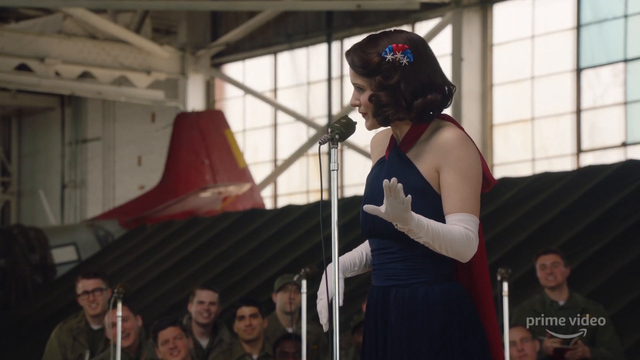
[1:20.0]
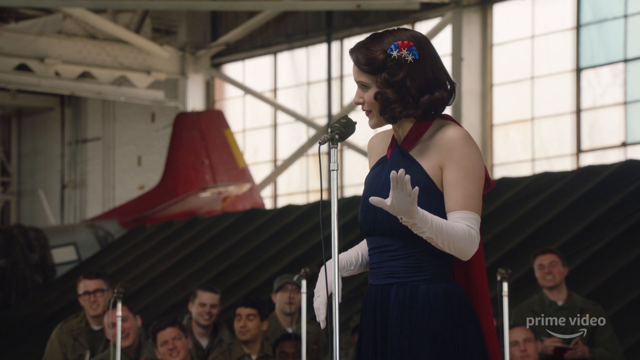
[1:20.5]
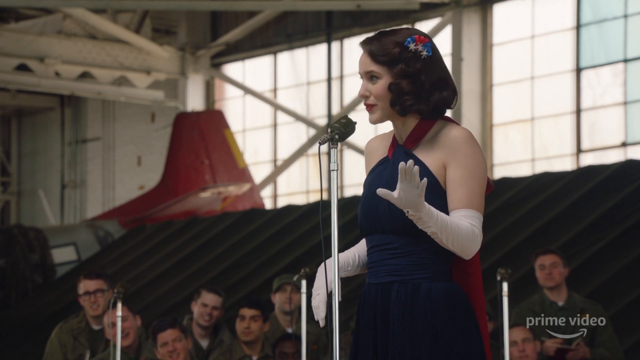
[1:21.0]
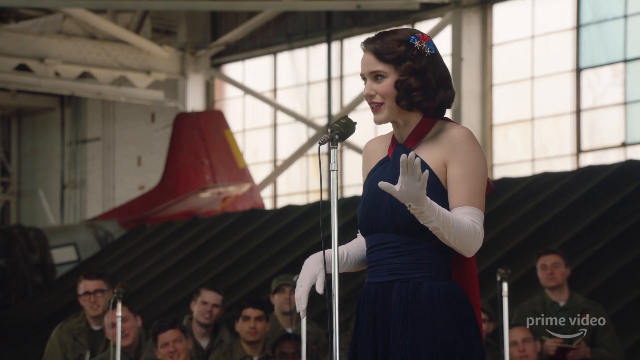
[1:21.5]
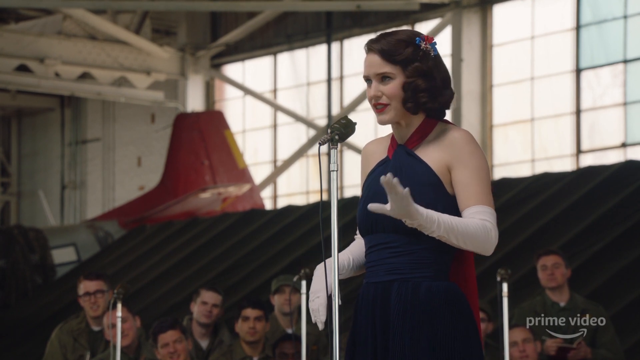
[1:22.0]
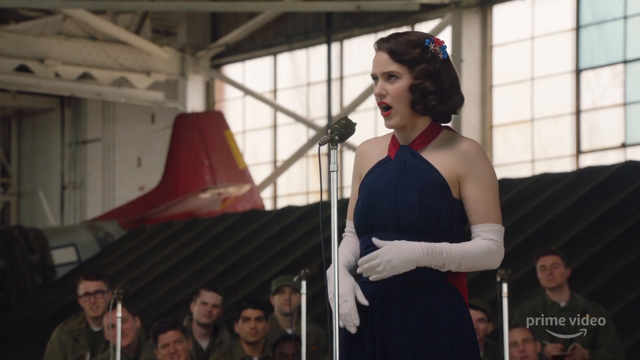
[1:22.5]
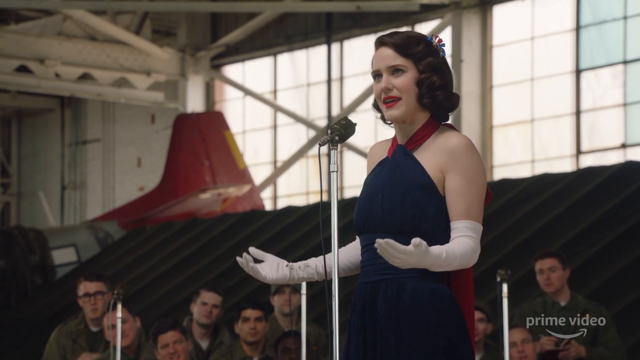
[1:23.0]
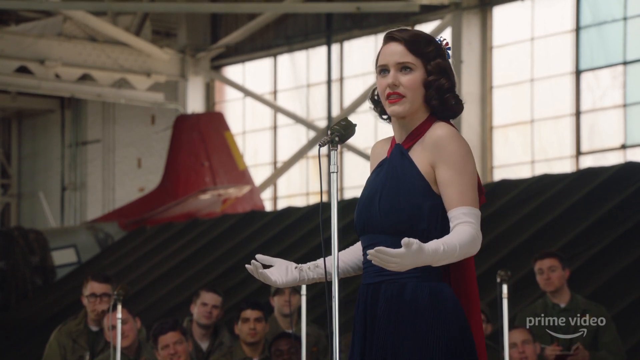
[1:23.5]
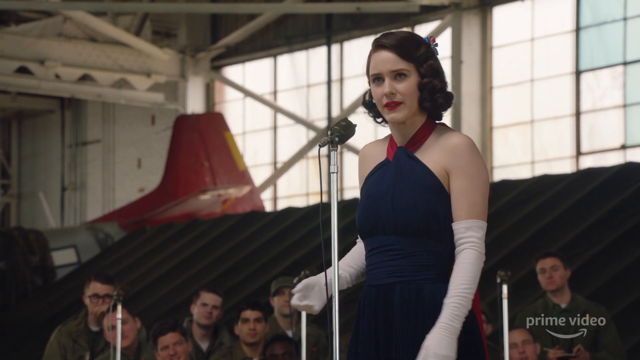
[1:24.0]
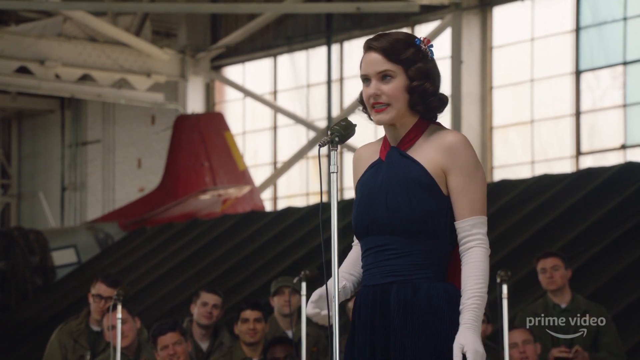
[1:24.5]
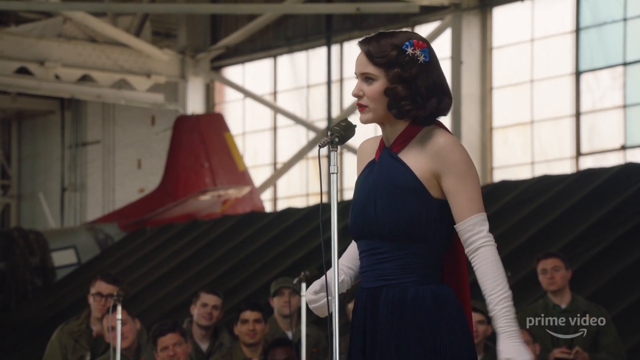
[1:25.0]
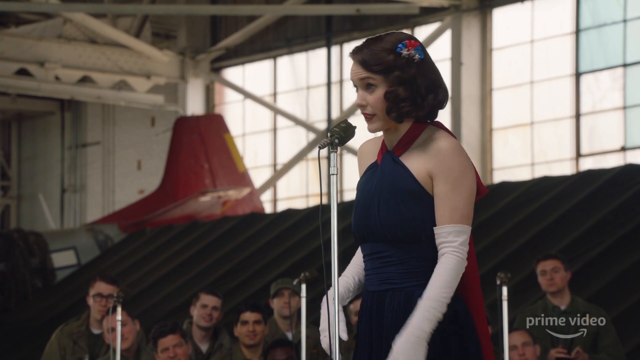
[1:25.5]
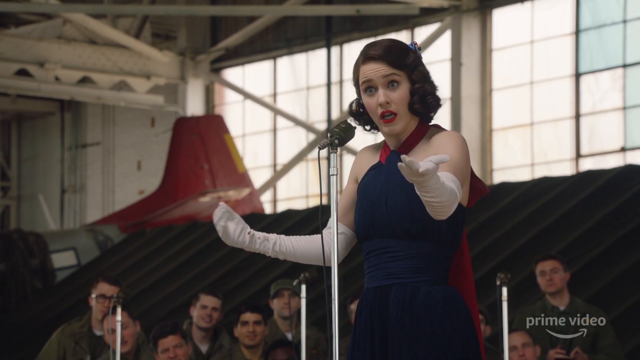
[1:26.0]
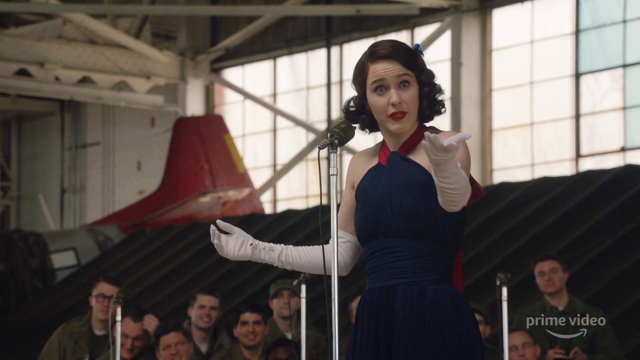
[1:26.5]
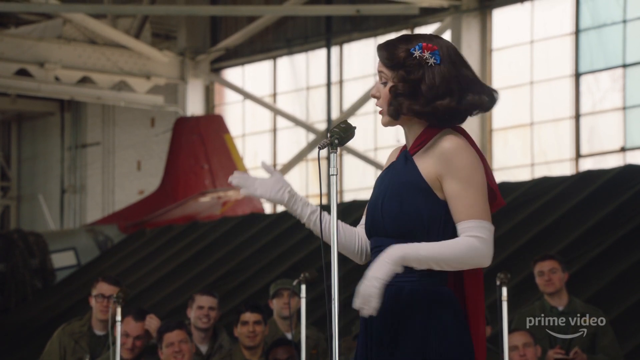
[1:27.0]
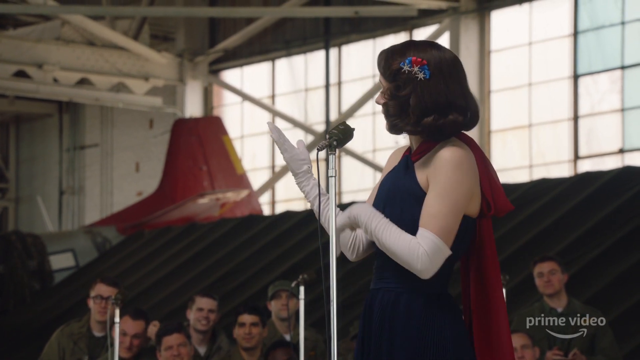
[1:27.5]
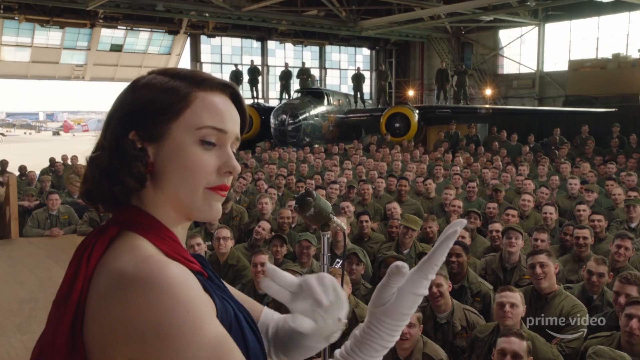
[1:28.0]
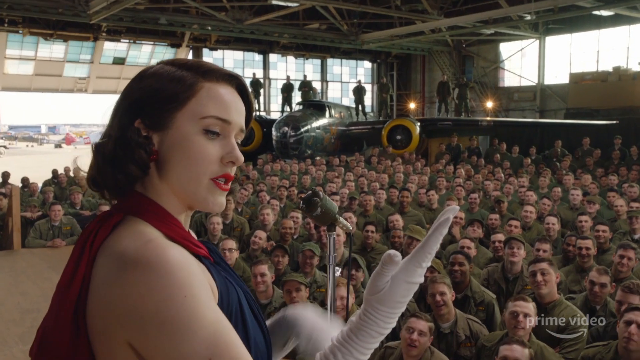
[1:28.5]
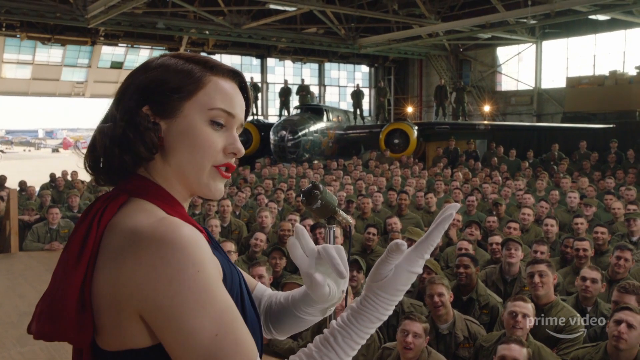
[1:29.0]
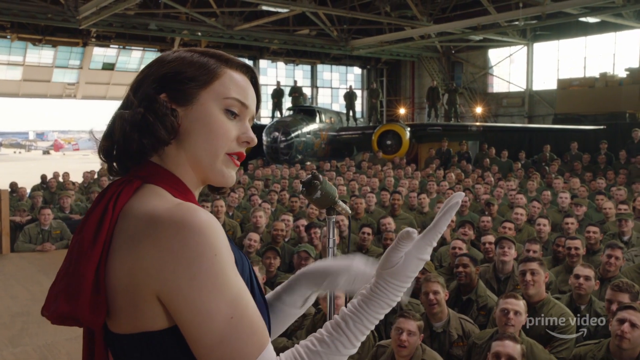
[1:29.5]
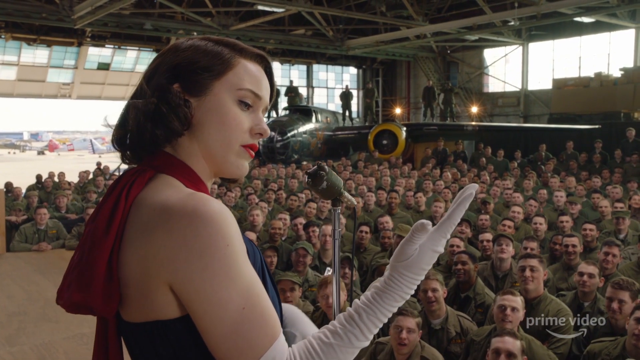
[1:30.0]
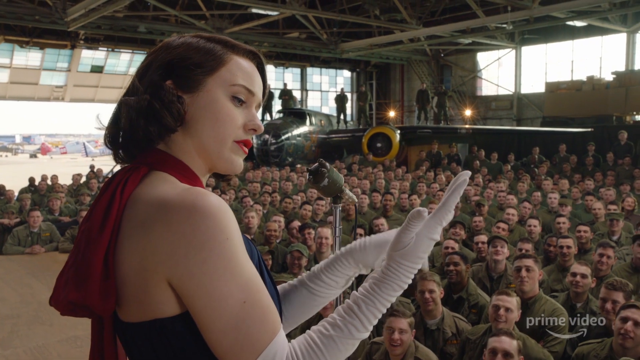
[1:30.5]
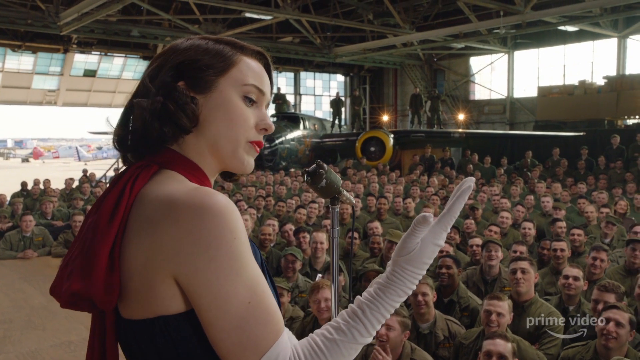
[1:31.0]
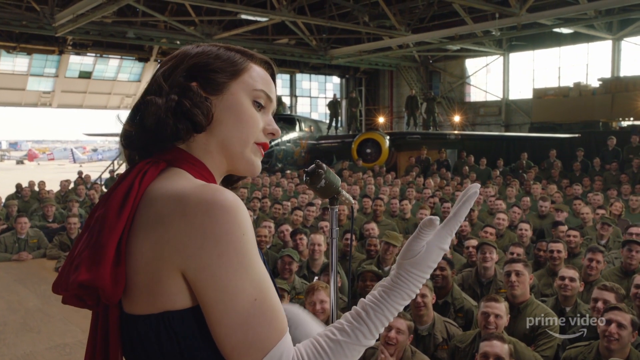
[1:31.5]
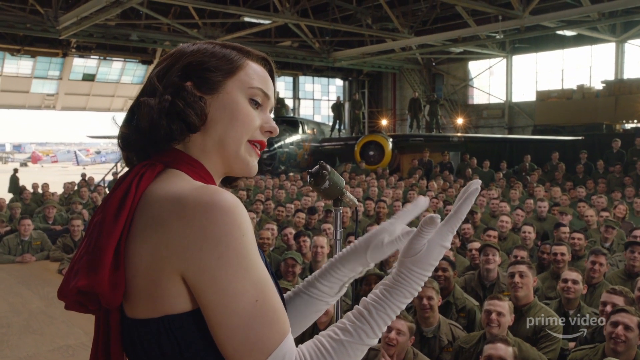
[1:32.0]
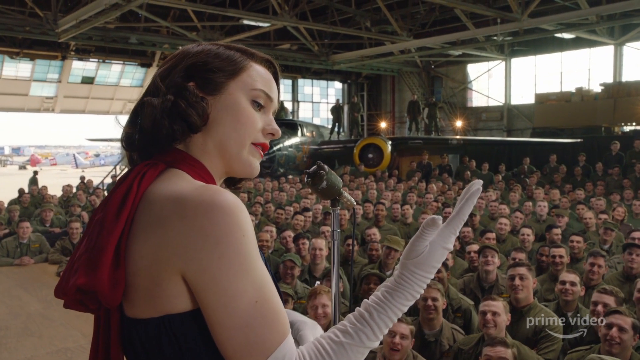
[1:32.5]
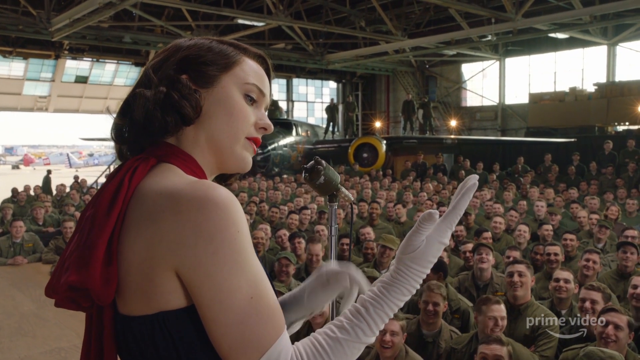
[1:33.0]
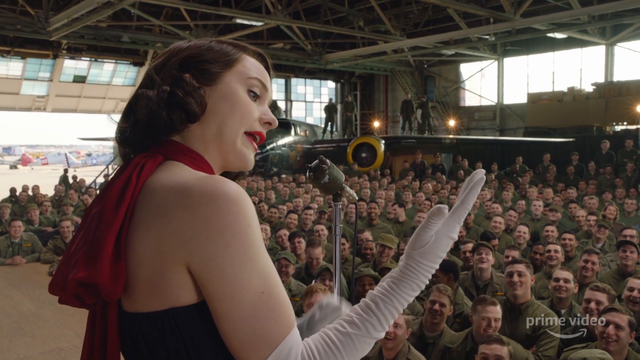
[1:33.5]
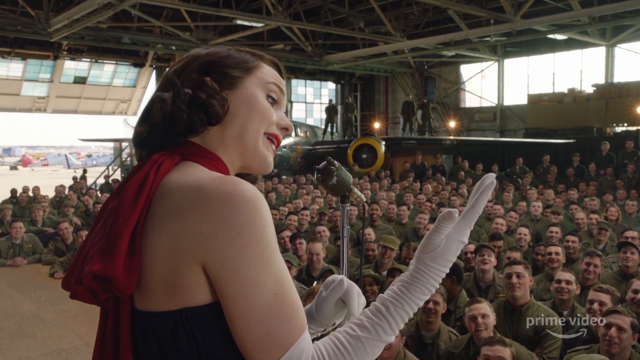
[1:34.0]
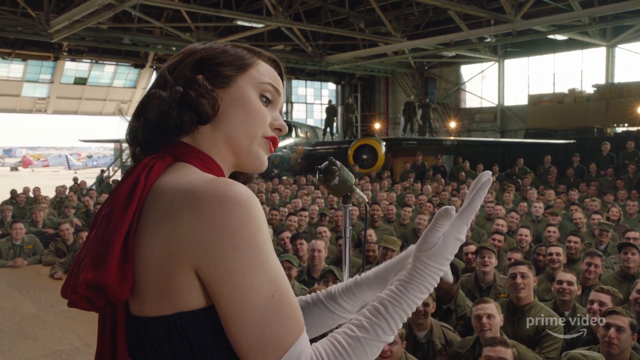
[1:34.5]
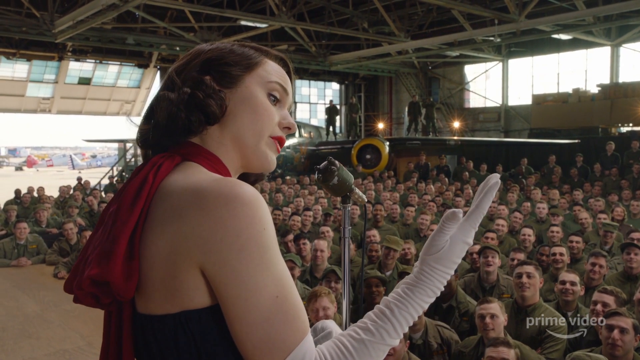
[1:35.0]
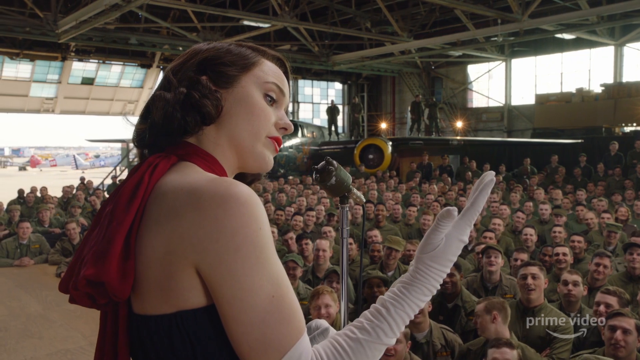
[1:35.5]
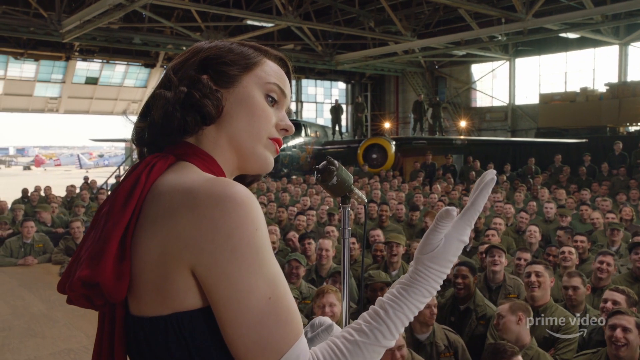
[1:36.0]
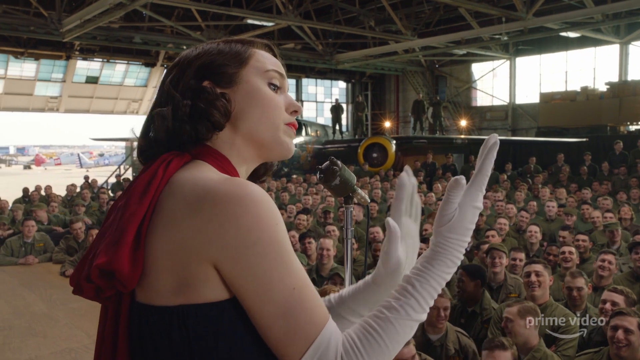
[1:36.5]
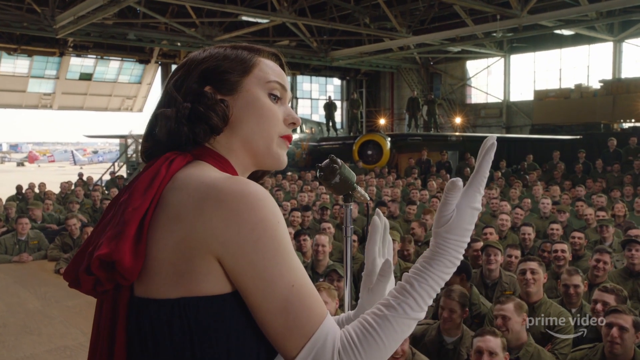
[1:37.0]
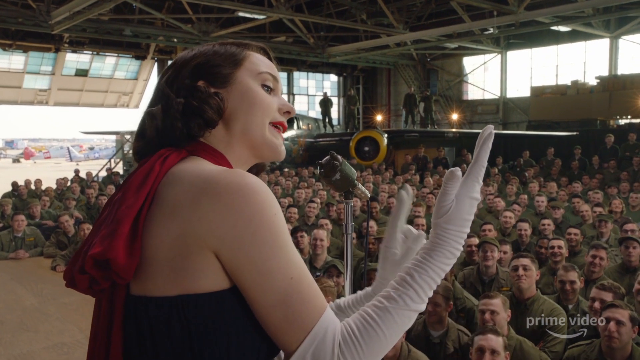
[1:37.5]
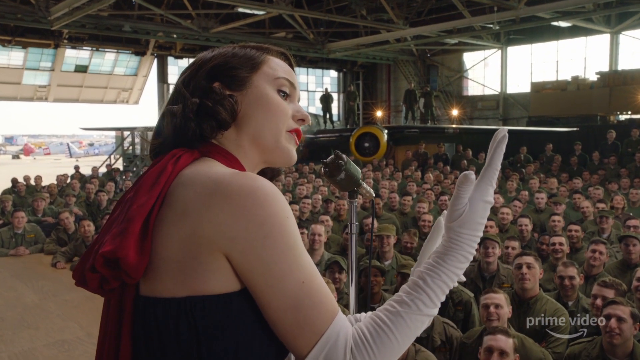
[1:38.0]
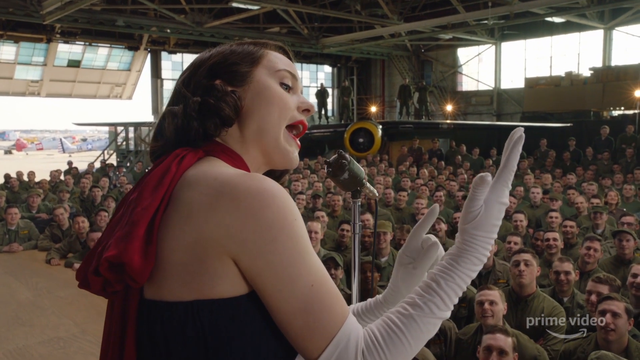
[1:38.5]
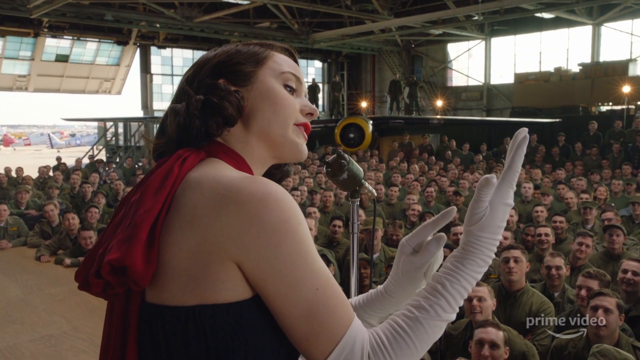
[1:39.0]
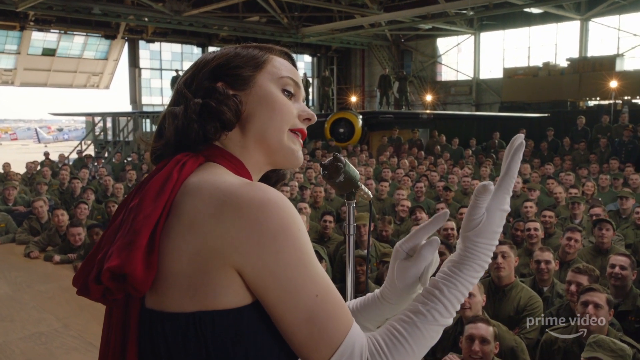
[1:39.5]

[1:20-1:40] She performs in front of a large crowd of soldiers inside the hangar, where three planes are visible: two at the back, one in each corner, and, in the view toward the stage, the tail of another plane. Some men sit on the stage, others stand on the wings of a plane, and others stand in the hangar. There are many soldiers, all male except for the lady performing at the front of the stage in the same attire. She is not singing but doing a performance that makes the men laugh. The video focuses on the lady as she gestures with her hands; the men listen and laugh. She continues performing, and a close-up shows her still gesturing with her hands.